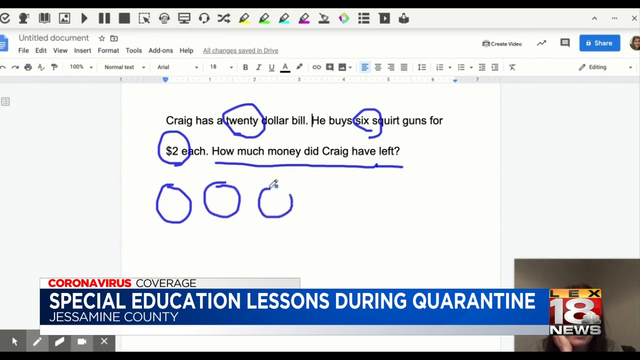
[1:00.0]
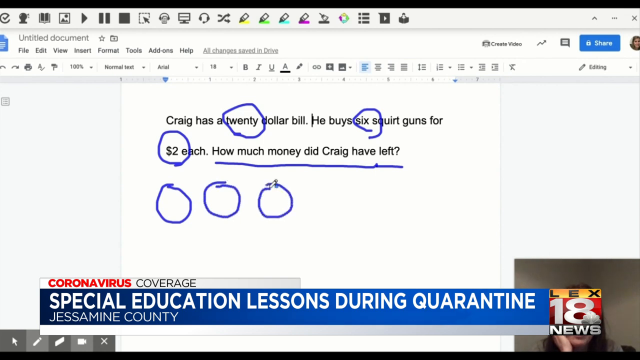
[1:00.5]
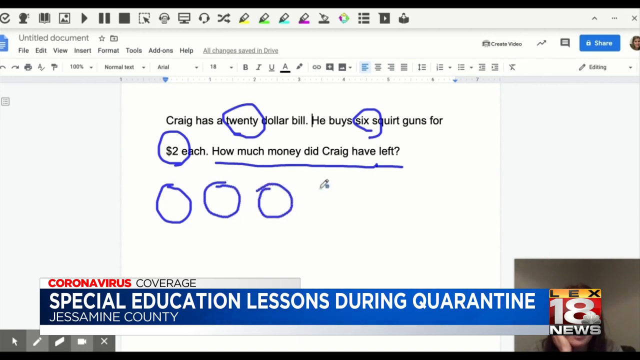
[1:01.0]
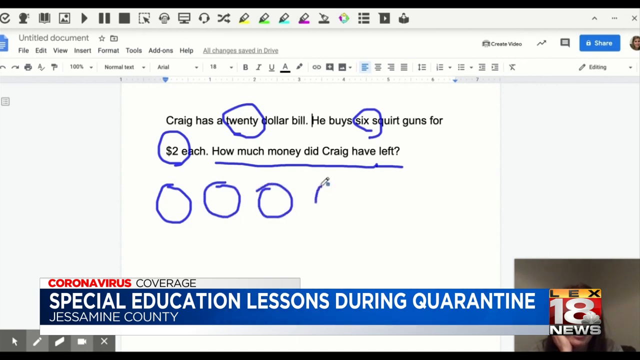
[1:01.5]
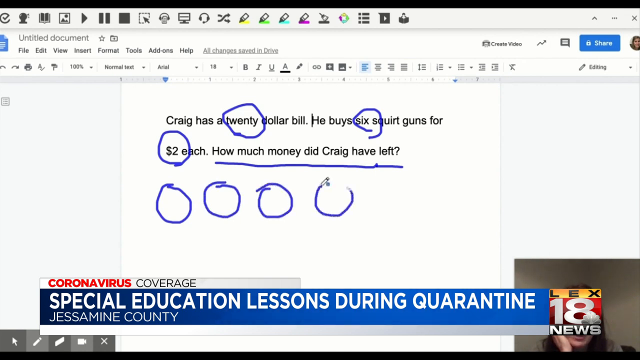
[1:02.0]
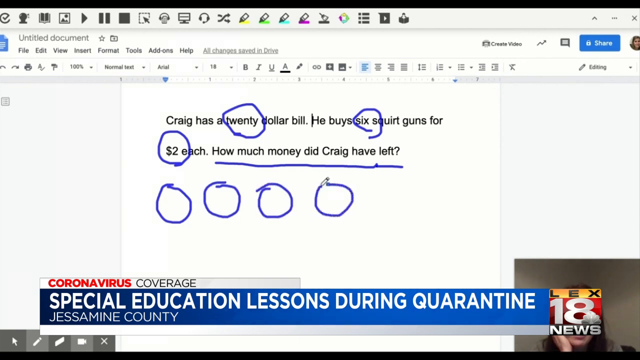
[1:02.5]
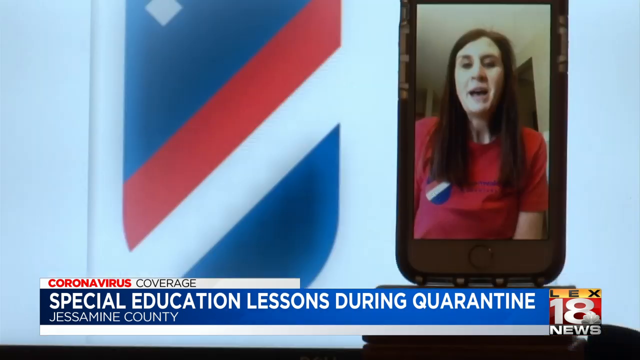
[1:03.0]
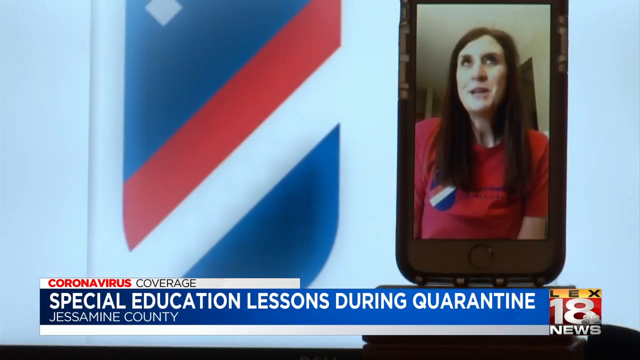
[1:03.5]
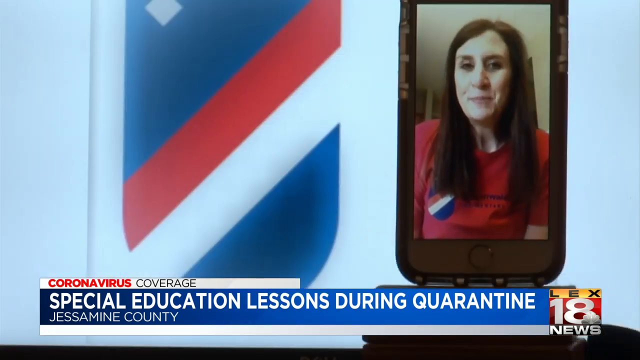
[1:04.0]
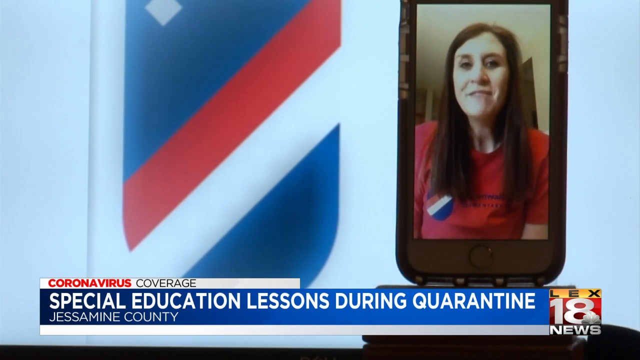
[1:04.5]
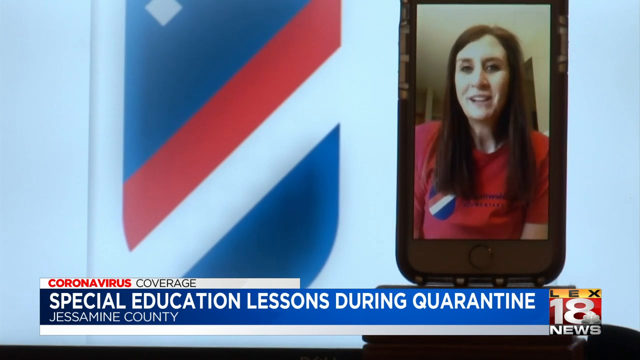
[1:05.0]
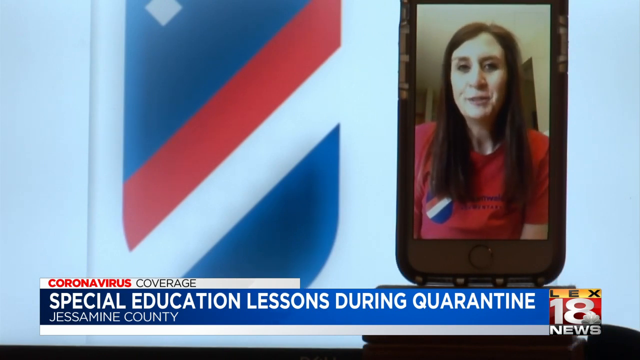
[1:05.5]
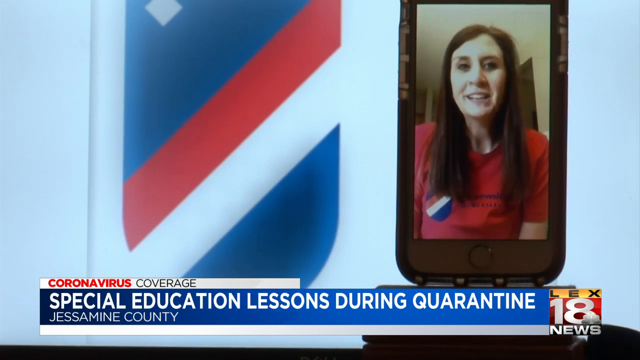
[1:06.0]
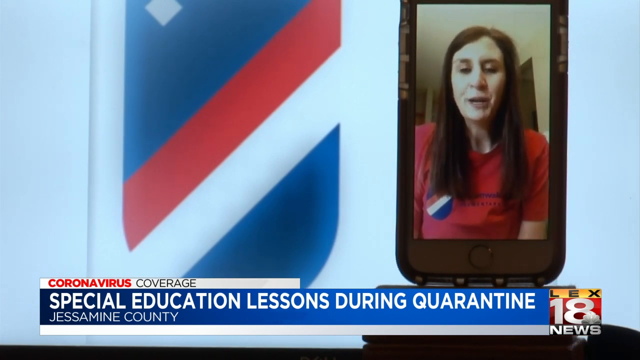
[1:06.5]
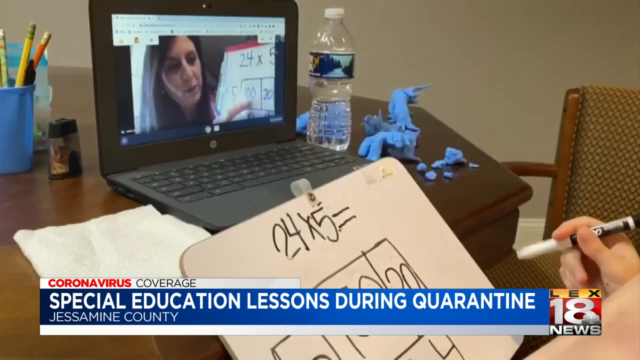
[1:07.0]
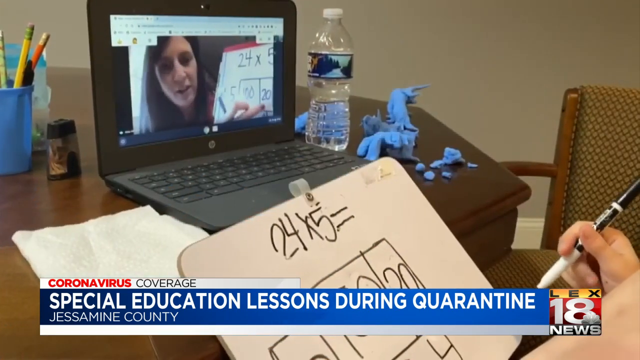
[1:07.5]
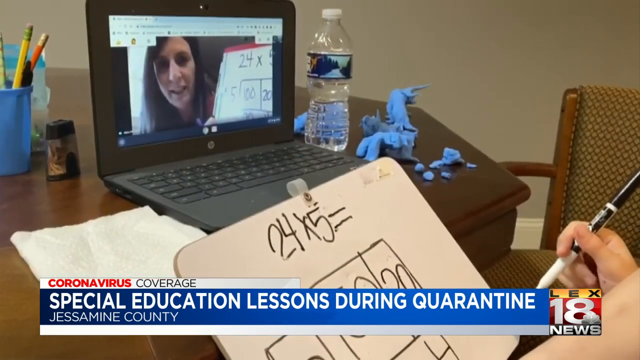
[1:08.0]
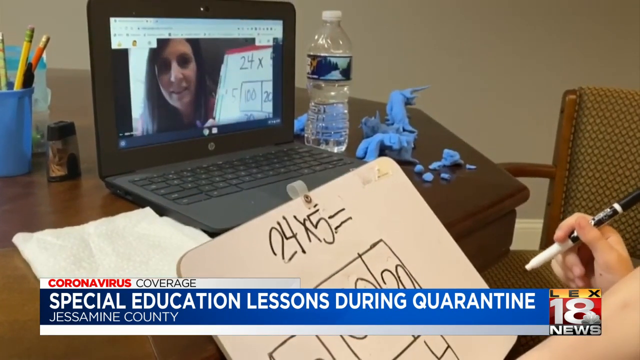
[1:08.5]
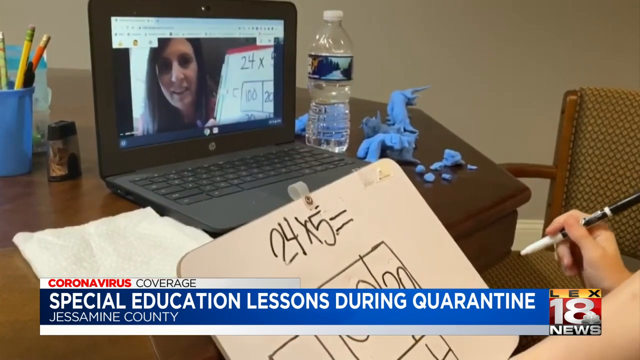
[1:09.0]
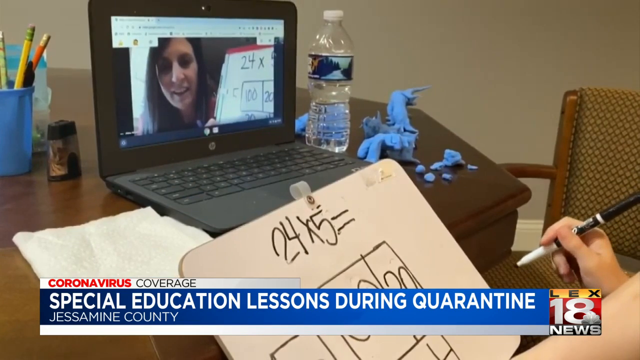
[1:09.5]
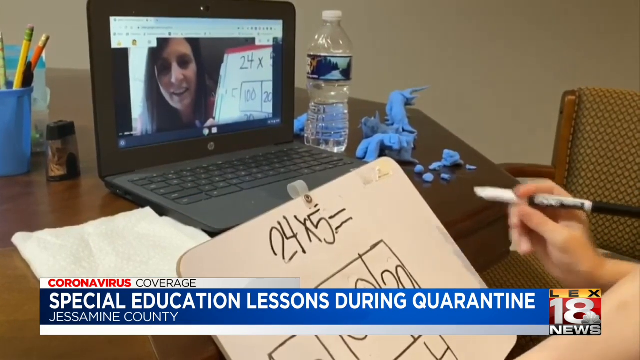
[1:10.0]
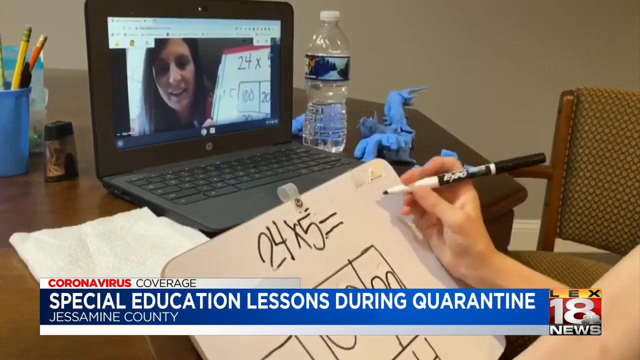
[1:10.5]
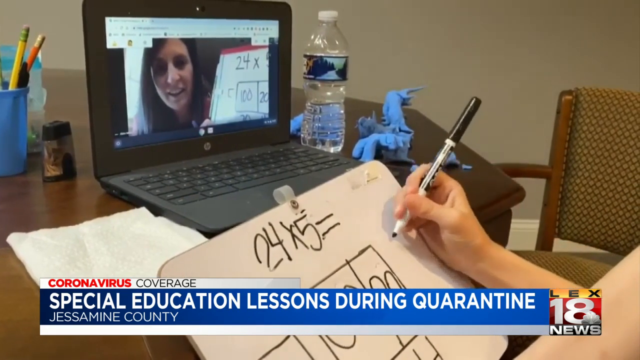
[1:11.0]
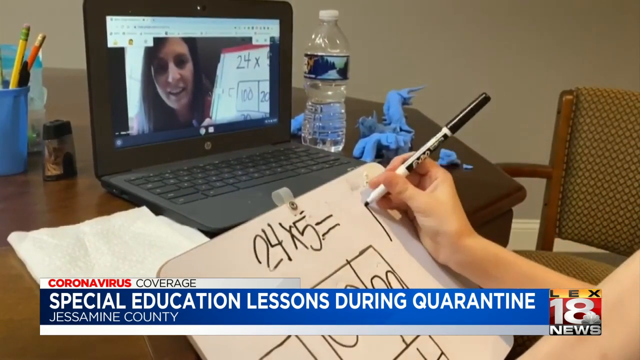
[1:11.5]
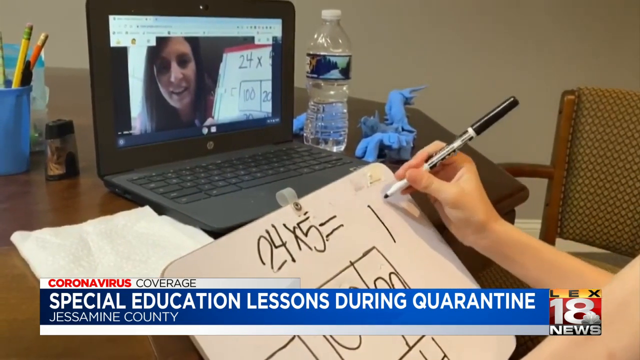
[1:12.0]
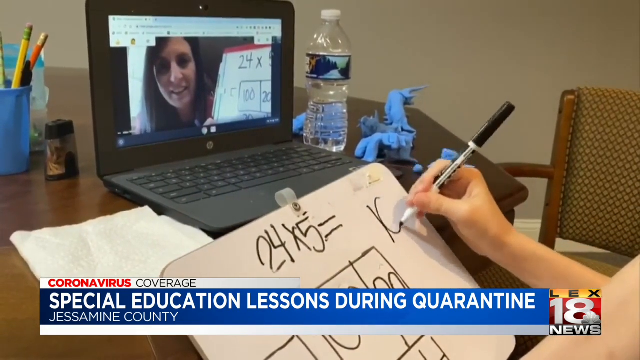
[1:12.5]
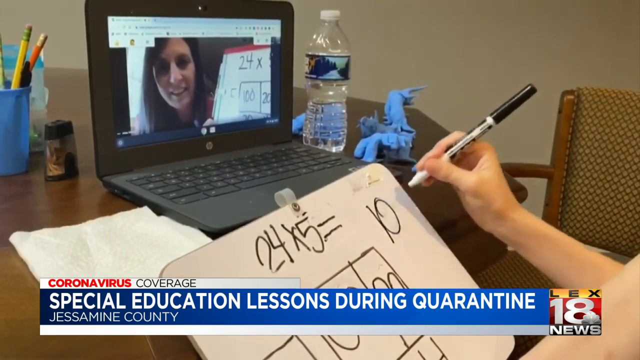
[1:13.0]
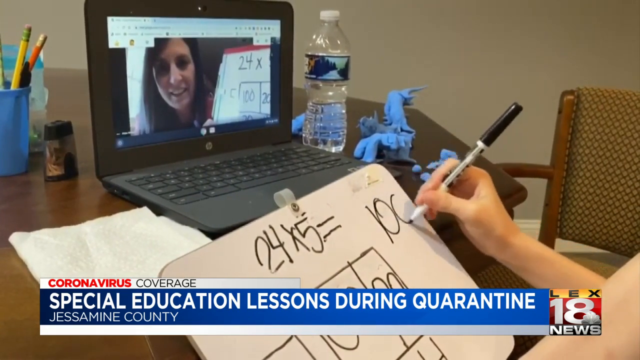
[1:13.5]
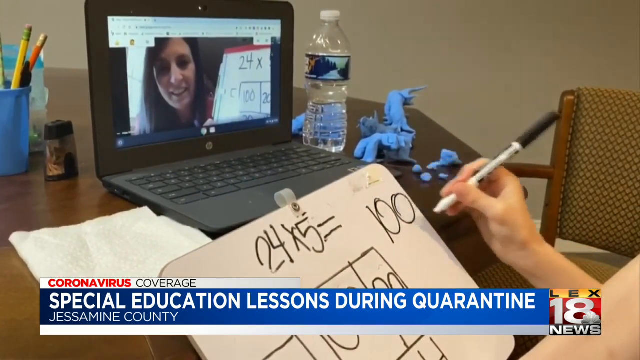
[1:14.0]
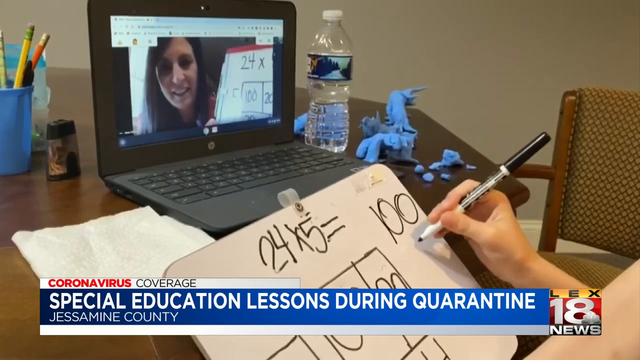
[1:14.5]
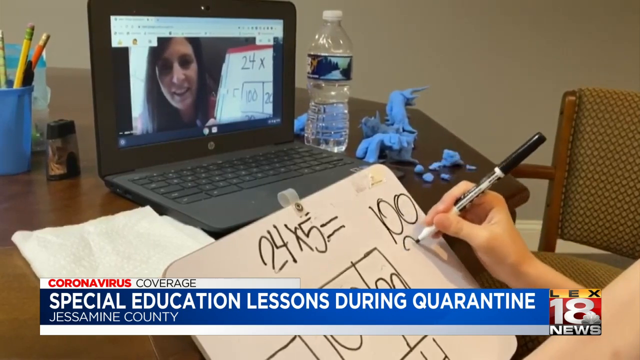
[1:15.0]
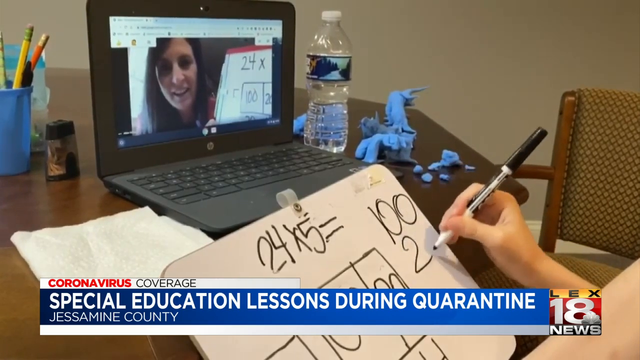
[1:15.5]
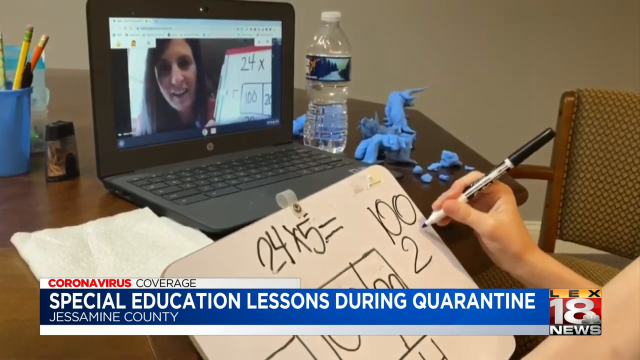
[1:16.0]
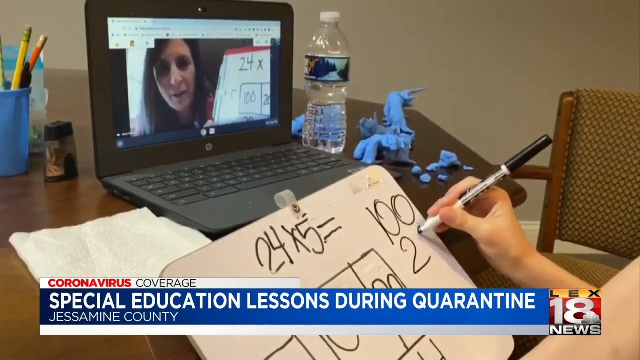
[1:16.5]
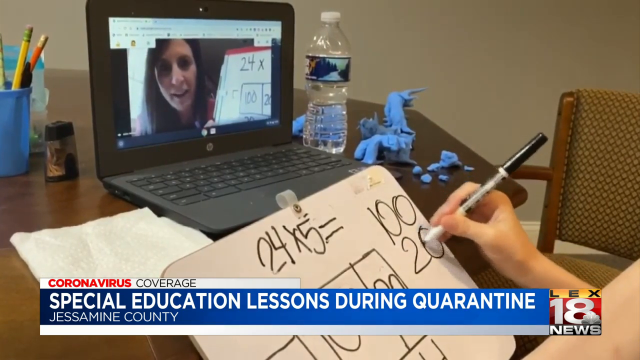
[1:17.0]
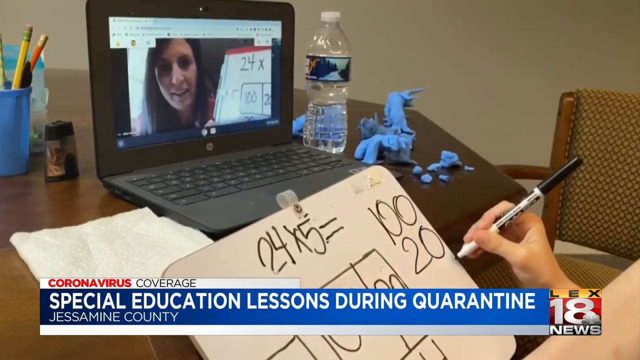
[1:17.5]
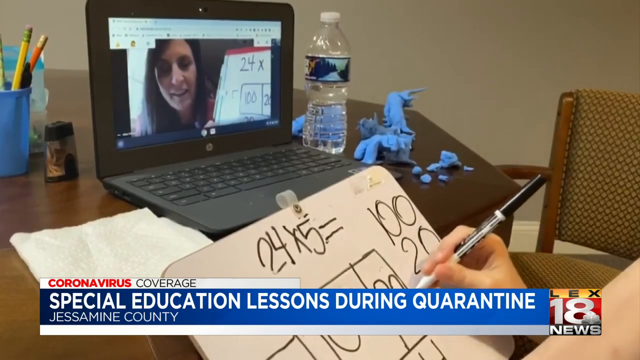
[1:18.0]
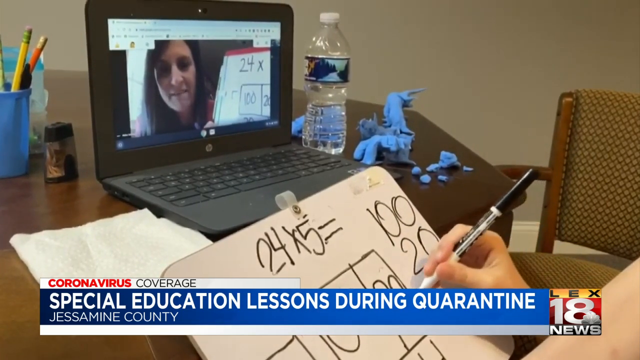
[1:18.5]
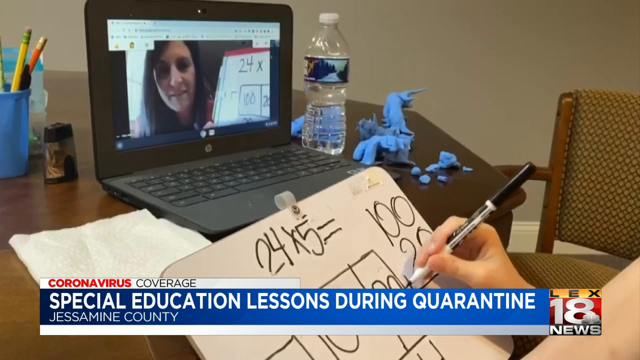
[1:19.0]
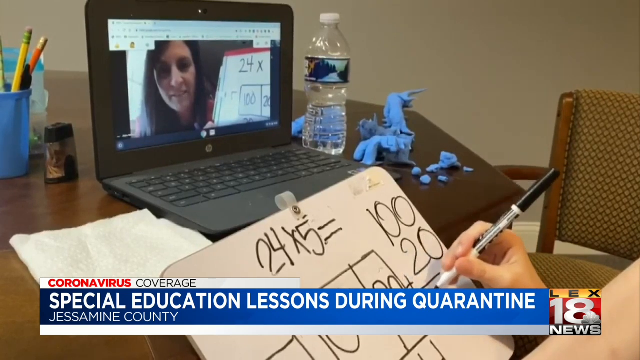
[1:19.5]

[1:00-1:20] An untitled document shows the words "Craig has a $20 bill he buys six squid guns for two dollars each. How much money did Craig have?" The numbers are marked with blue circles. The woman draws four circles. At the bottom, TV text says "coronavirus coverage, special education lessons during quarantine in Jessamine County." A woman wearing a red t-shirt speaks to somebody; she appears on a small phone. She then holds up a marker in her right hand. A 24 times 5 board is visible, and there are some water bottles and a laptop in front of her. On the laptop there is a woman, and the student writes 100 and then 20. She draws a line and a plus symbol, then writes the answer at the bottom.